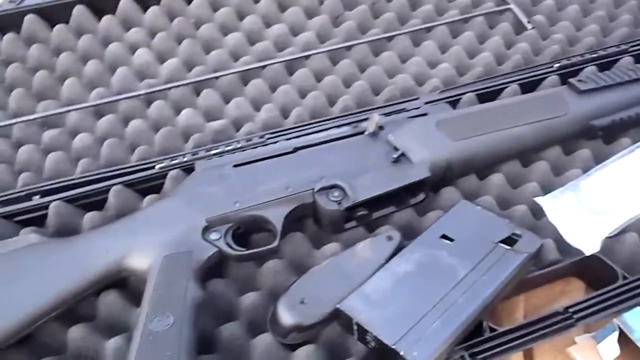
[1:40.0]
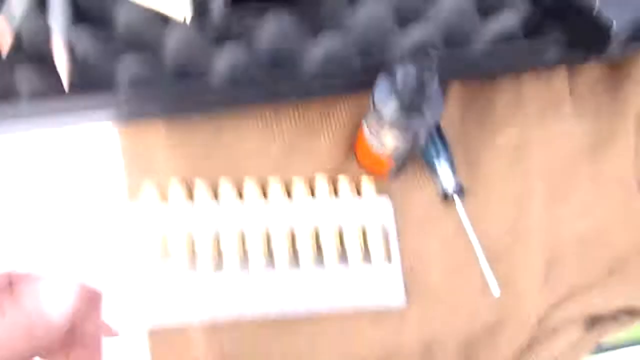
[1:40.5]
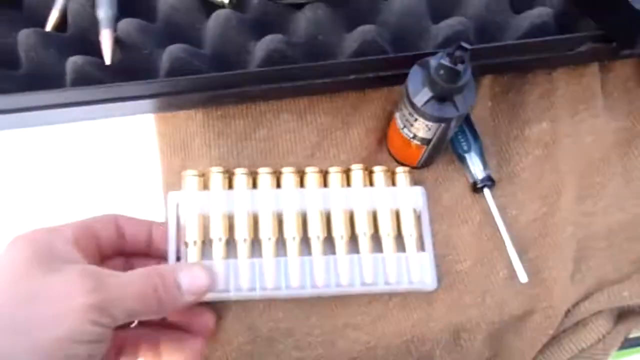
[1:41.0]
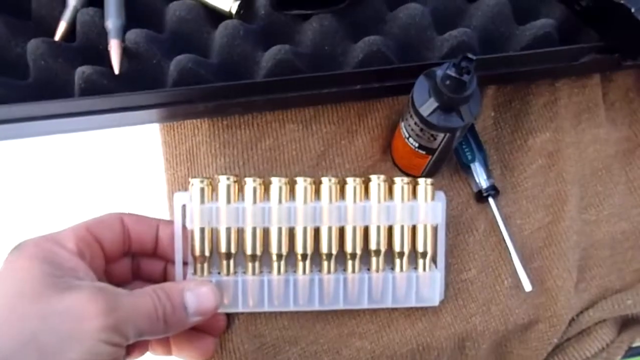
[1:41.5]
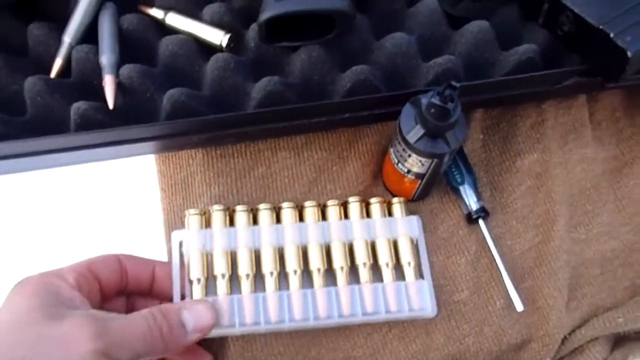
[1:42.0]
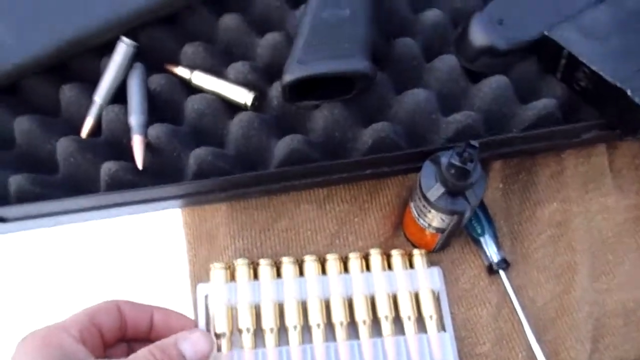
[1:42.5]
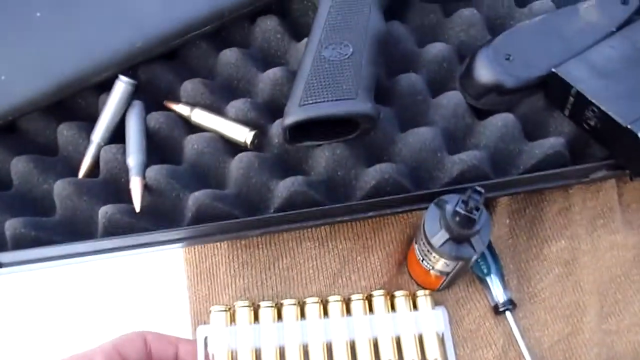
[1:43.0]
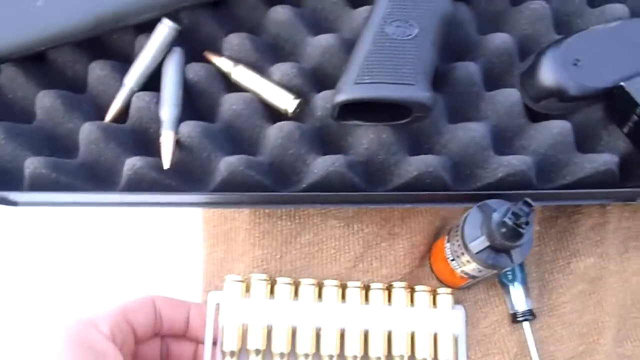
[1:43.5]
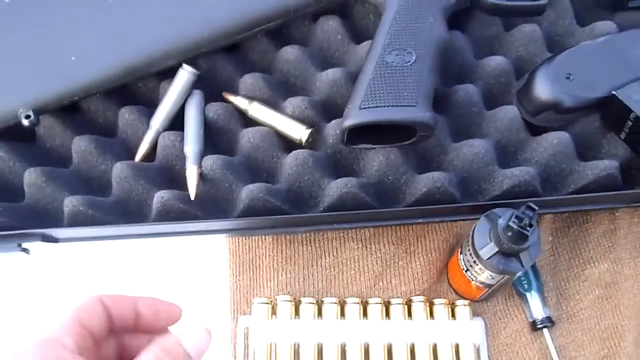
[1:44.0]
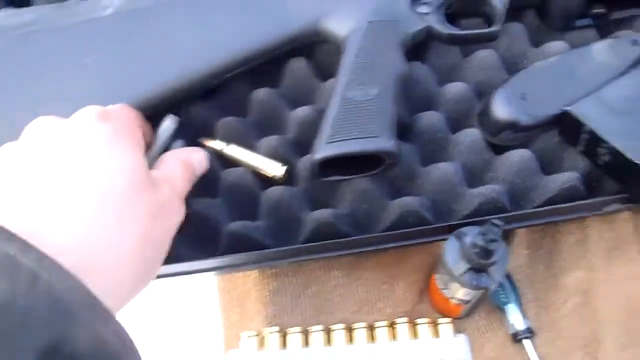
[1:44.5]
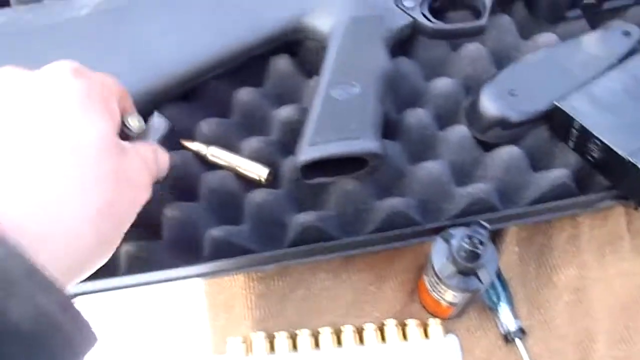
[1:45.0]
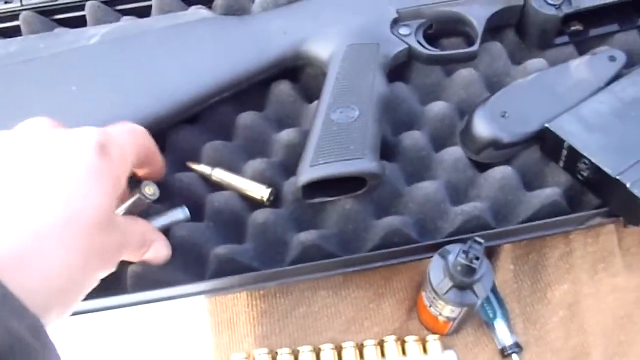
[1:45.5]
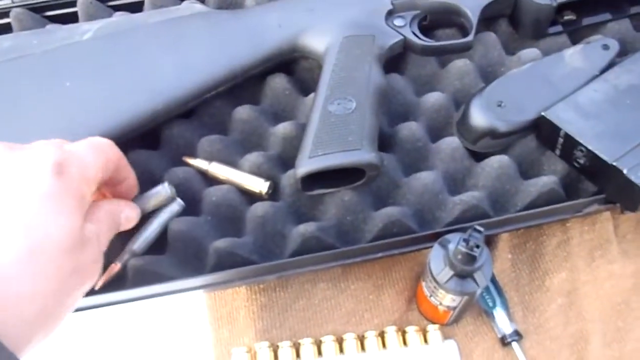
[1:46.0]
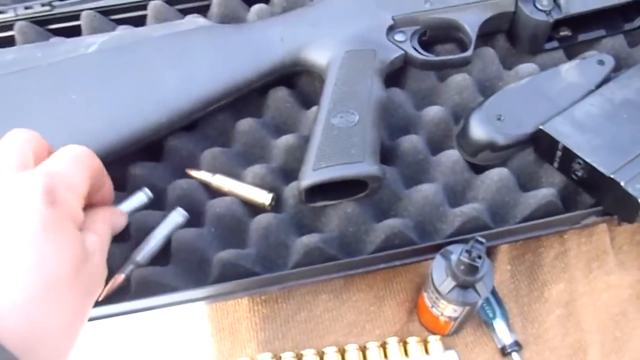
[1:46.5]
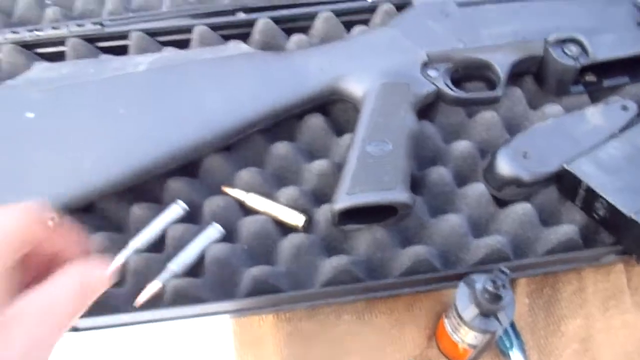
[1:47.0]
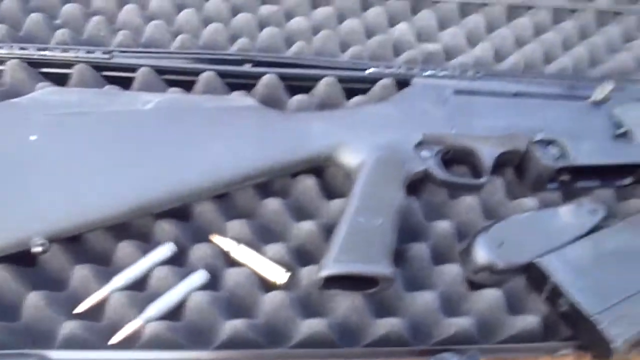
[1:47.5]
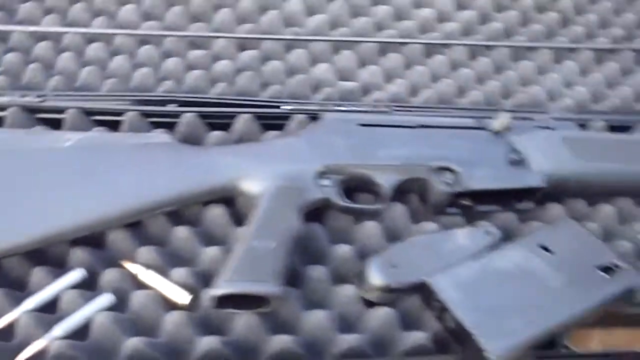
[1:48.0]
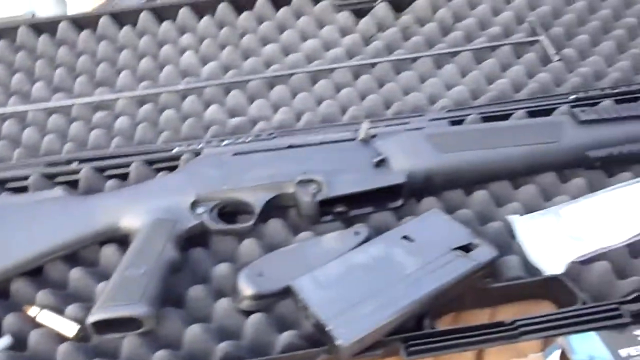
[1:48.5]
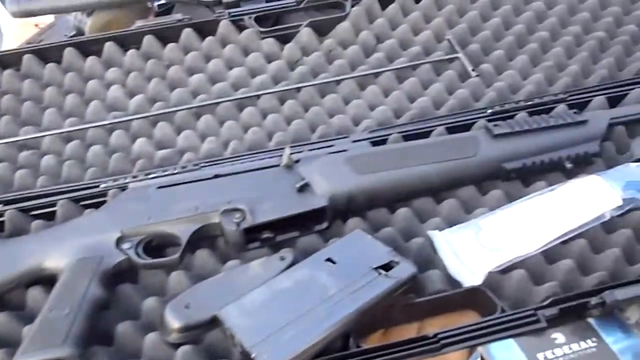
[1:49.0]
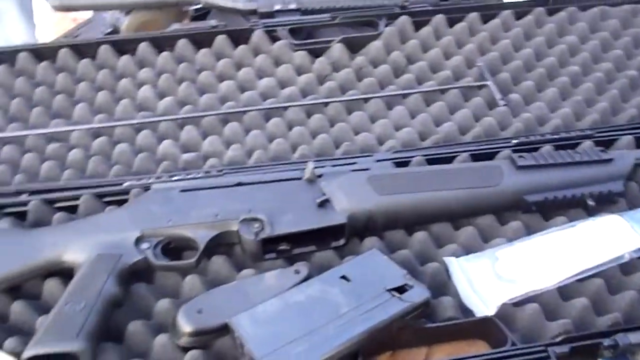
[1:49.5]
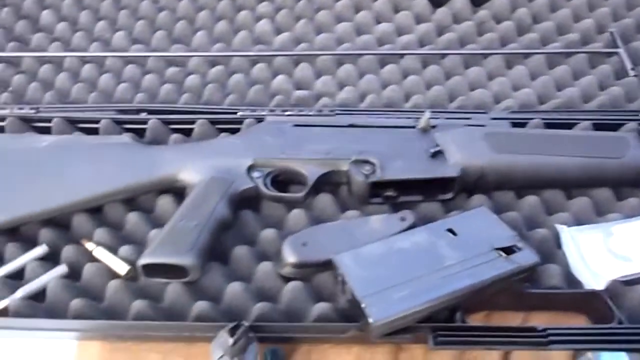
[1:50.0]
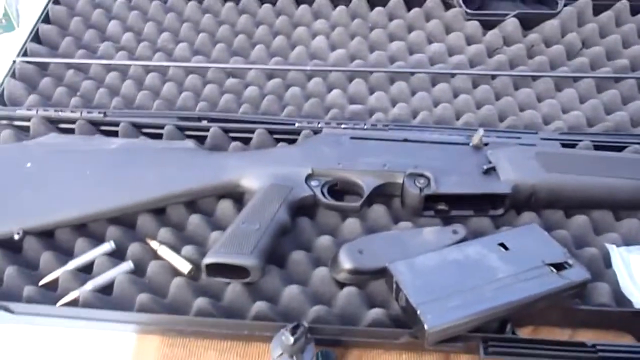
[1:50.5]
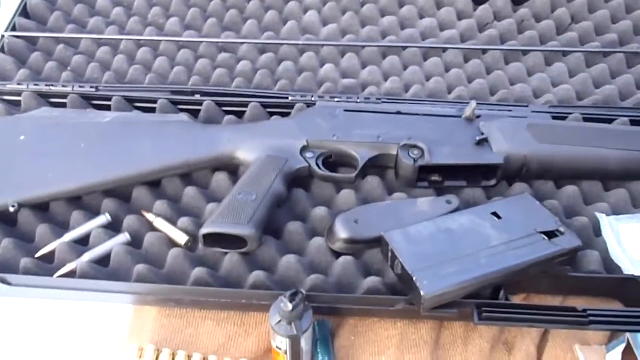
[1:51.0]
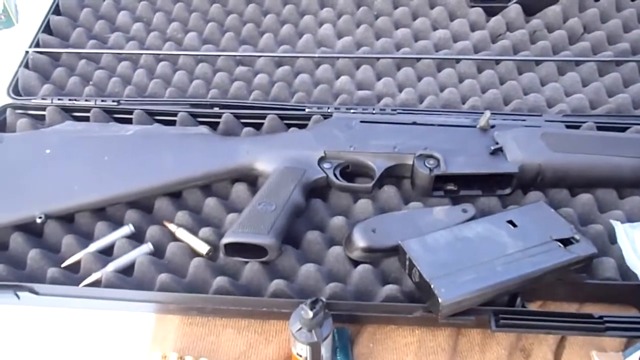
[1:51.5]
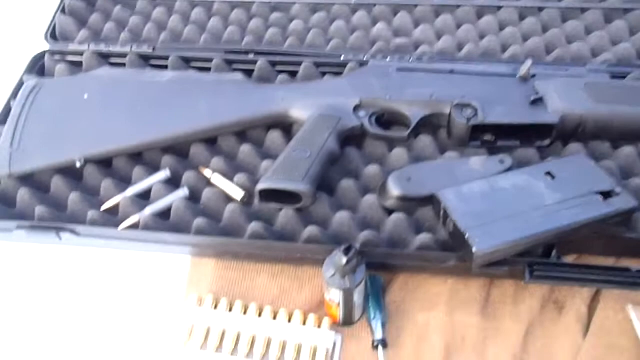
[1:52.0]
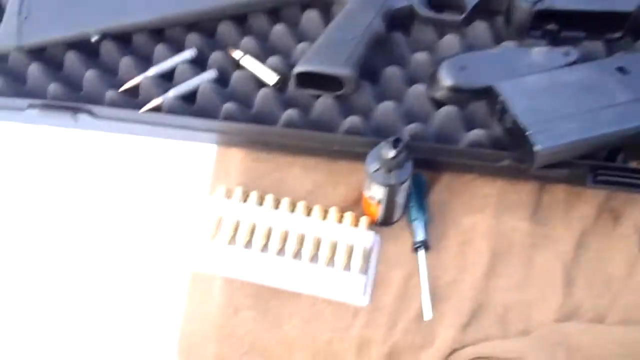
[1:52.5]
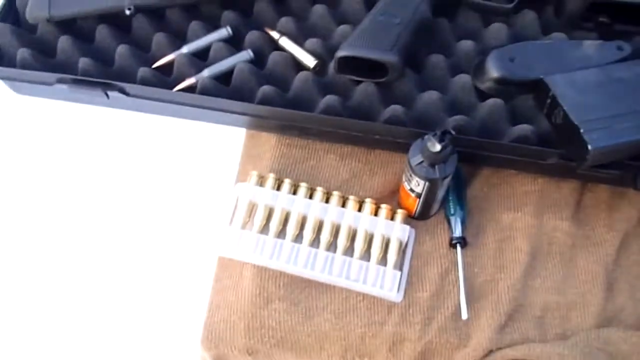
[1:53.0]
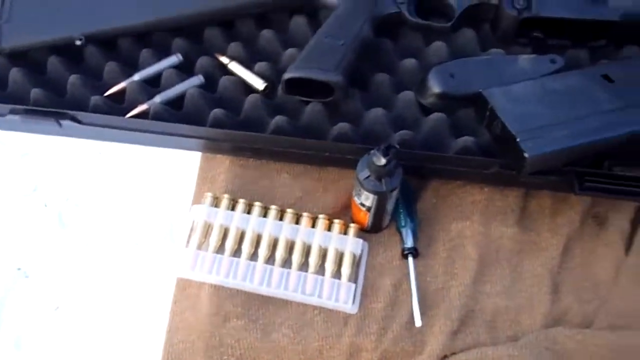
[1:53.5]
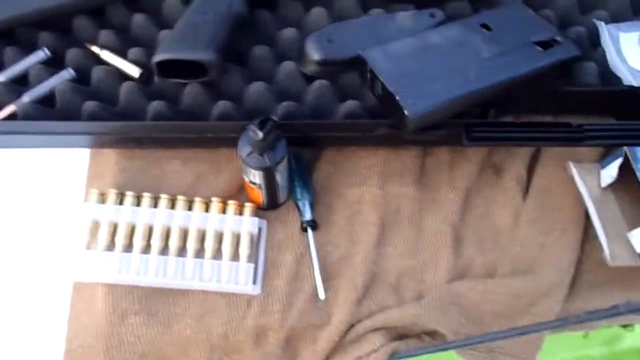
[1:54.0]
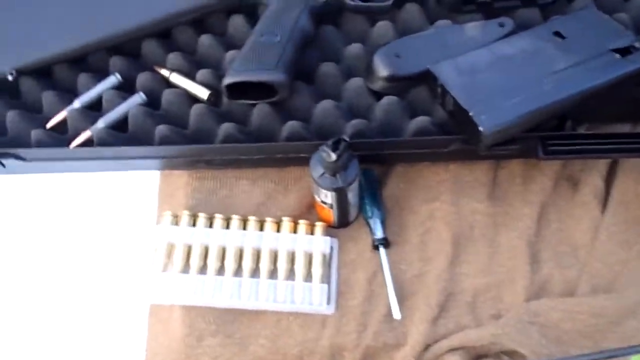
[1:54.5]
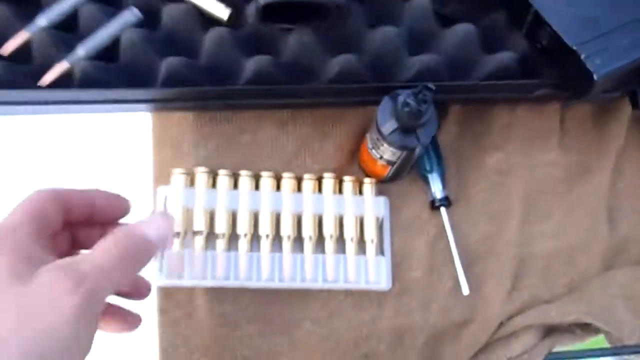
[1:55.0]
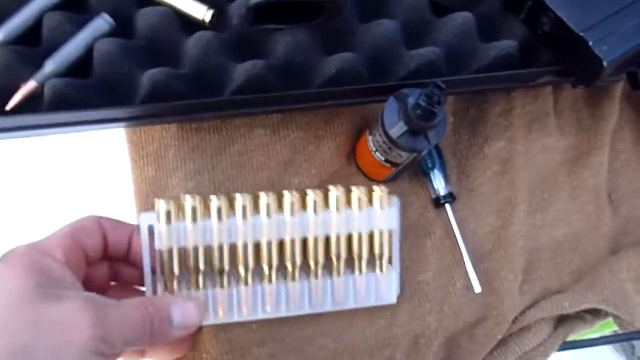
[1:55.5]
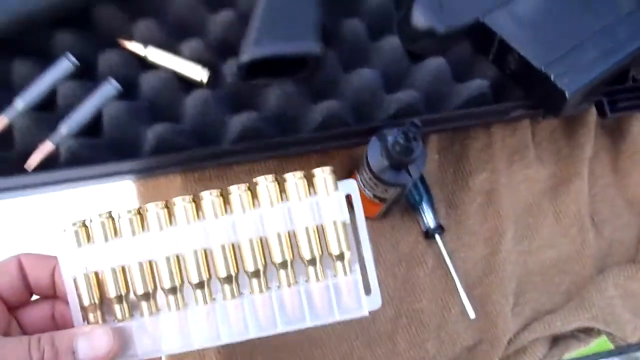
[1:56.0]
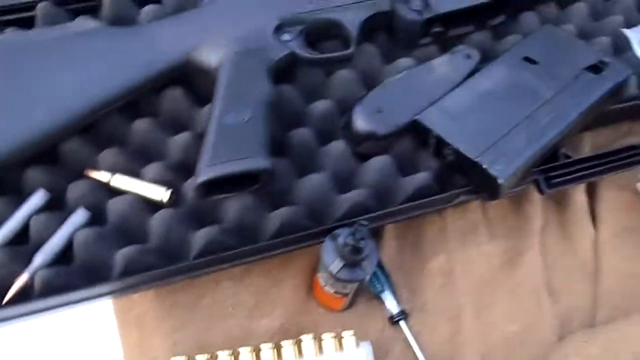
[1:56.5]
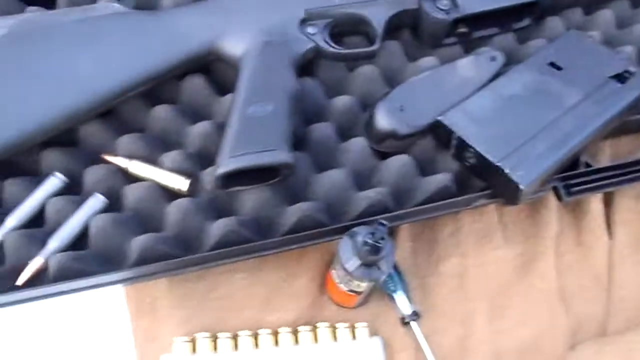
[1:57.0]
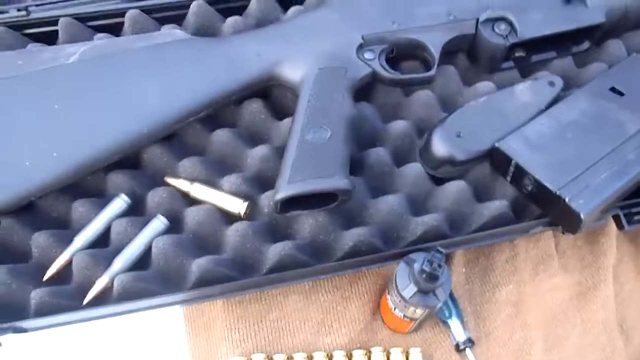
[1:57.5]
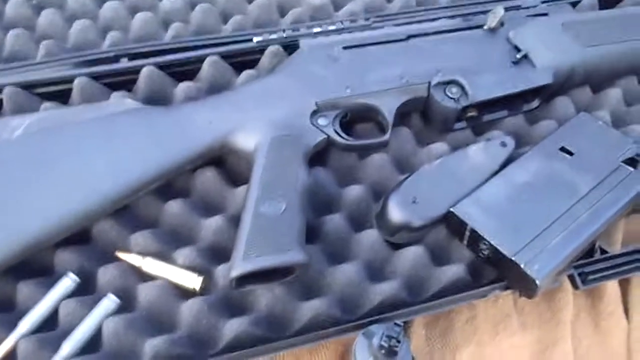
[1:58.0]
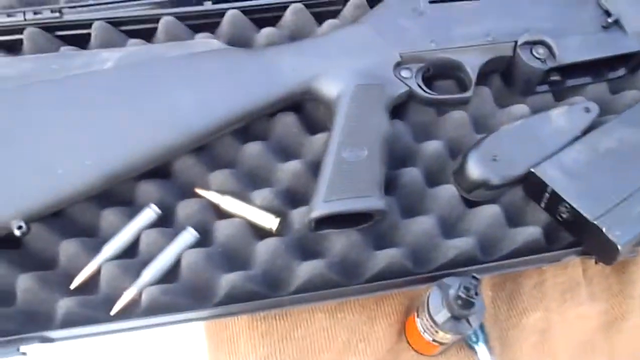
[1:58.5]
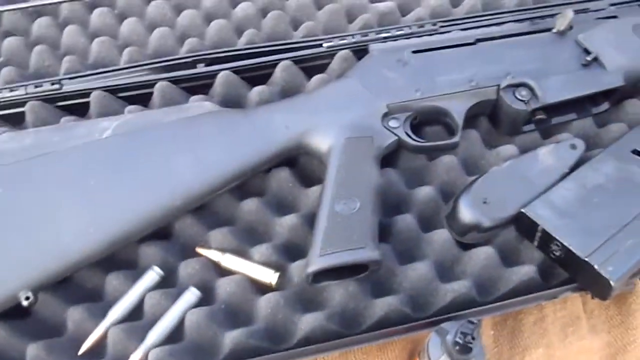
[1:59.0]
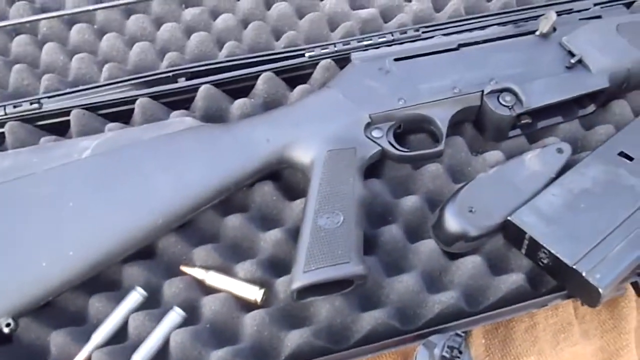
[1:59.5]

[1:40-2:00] Multiple rounds and other equipment lay next to the firearm. The camera pans down to a screwdriver and what is apparently some sort of oil. The man backs out multiple rounds, and there is a box of cases. Multiple rounds lay next to the firearm. The man seems to be fixing the firearms.